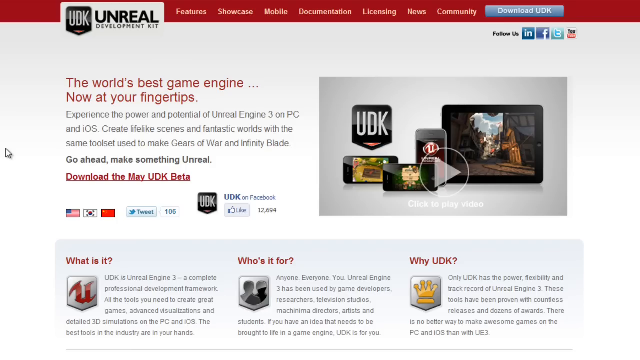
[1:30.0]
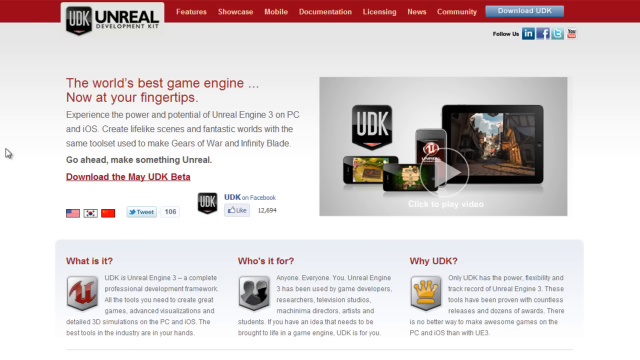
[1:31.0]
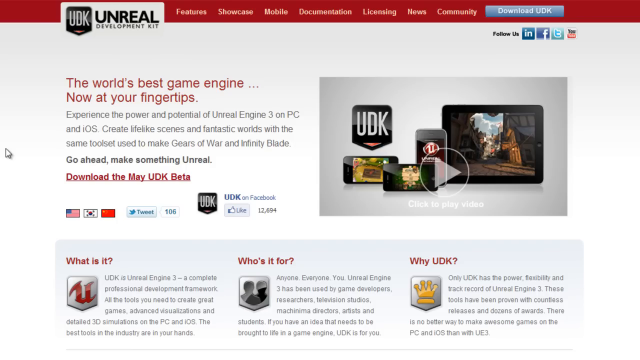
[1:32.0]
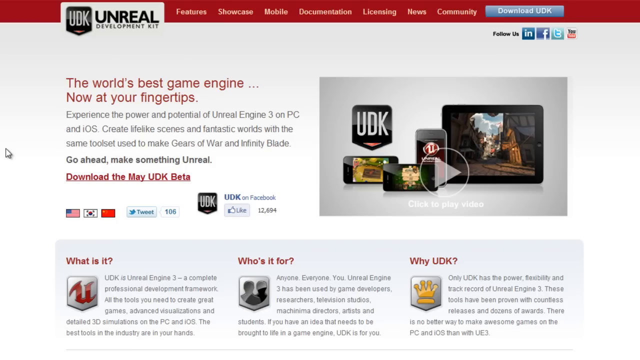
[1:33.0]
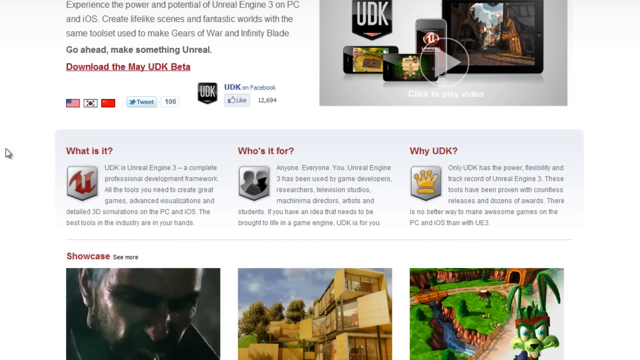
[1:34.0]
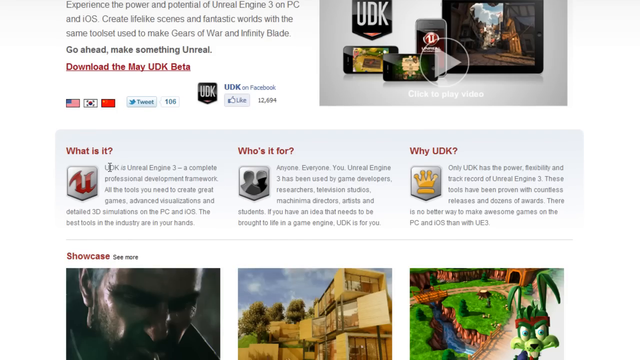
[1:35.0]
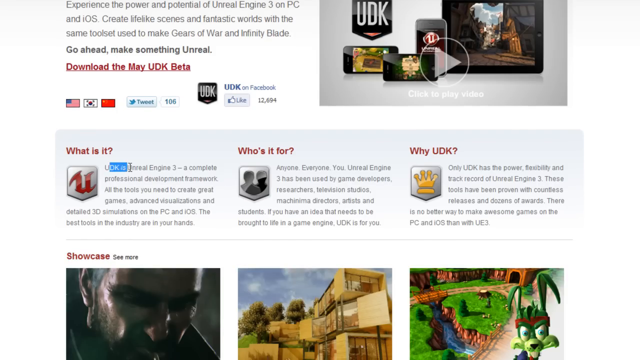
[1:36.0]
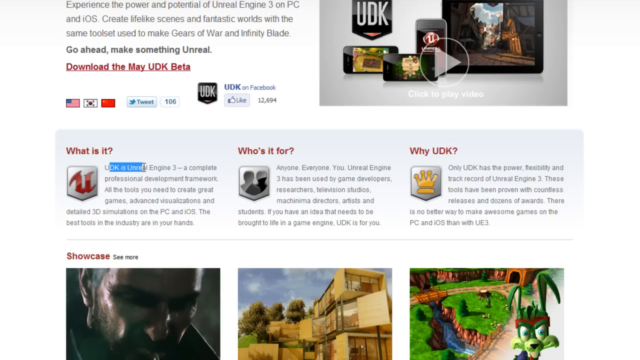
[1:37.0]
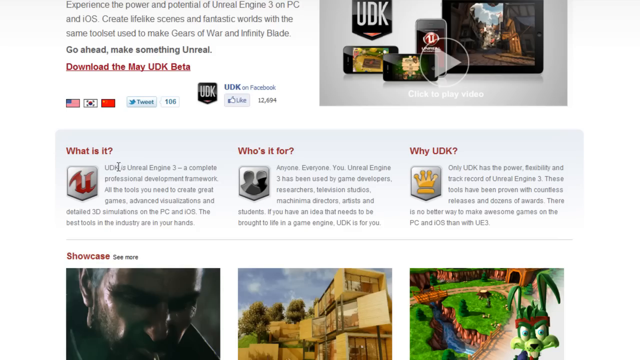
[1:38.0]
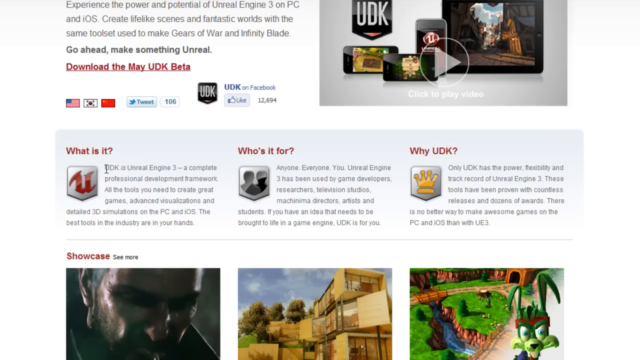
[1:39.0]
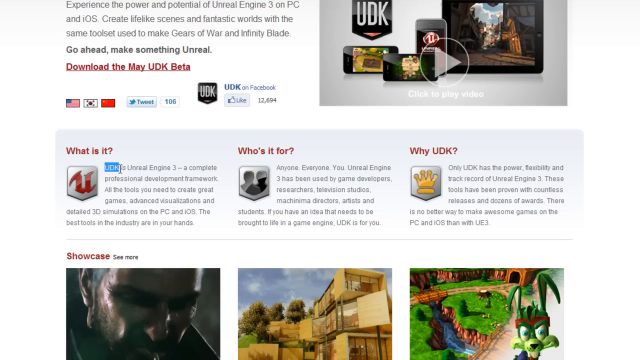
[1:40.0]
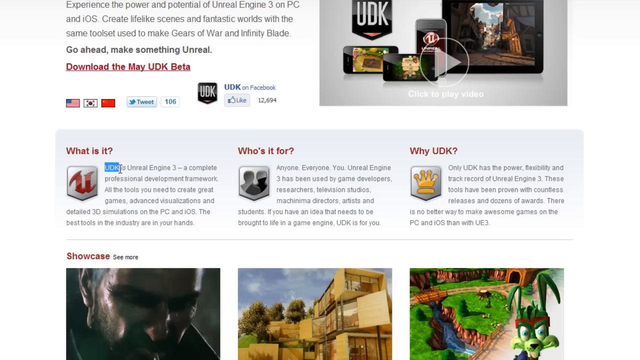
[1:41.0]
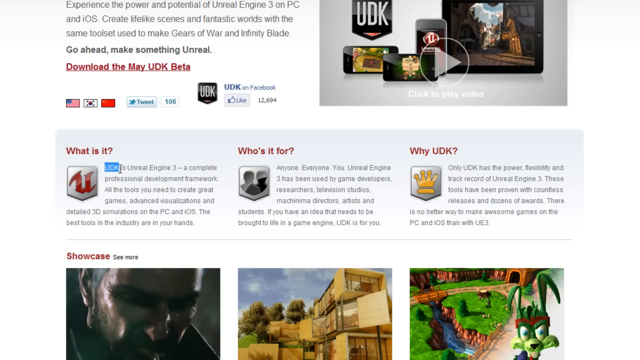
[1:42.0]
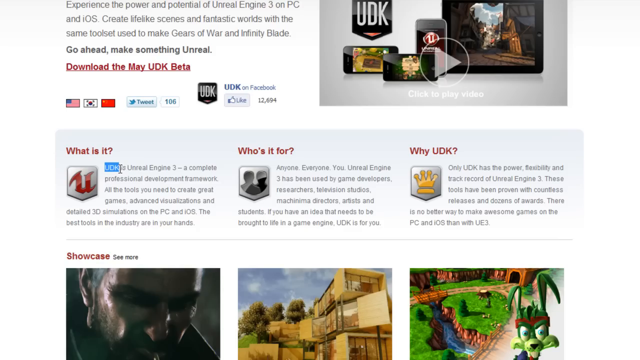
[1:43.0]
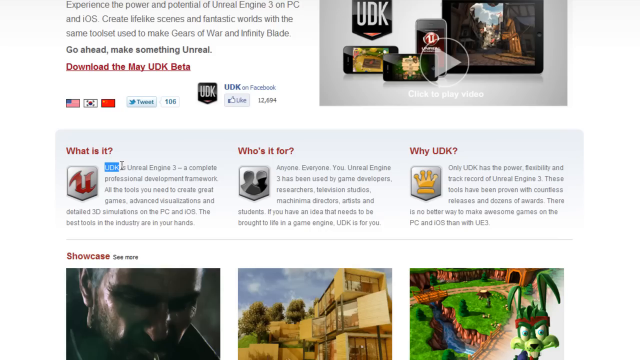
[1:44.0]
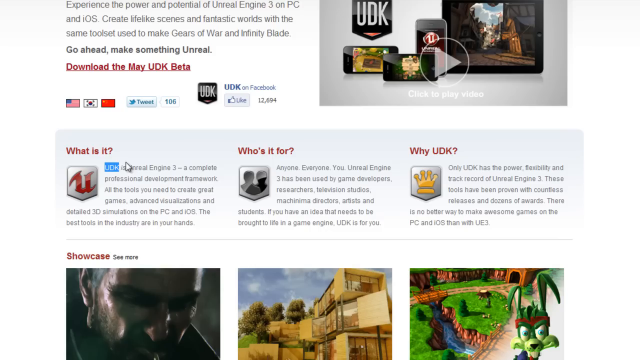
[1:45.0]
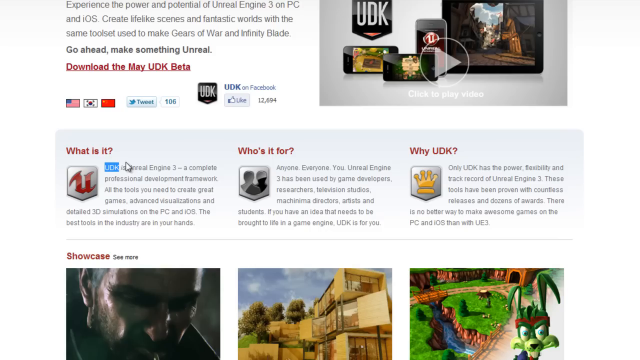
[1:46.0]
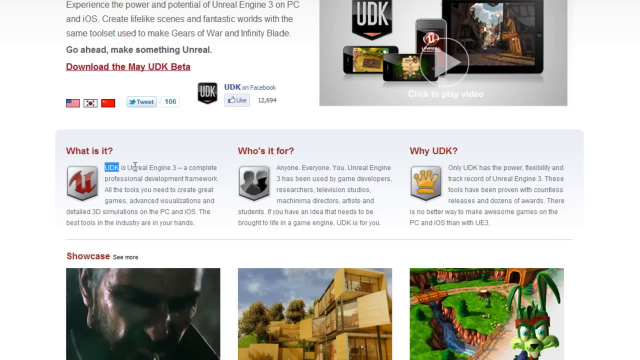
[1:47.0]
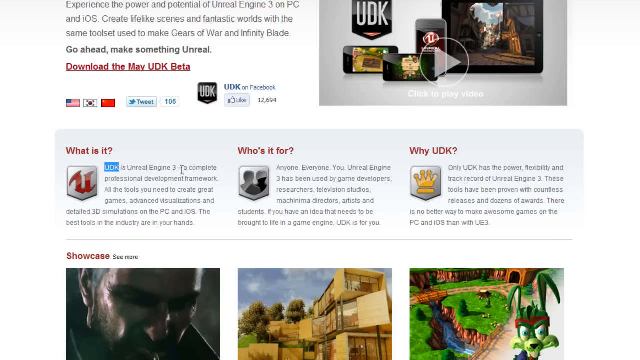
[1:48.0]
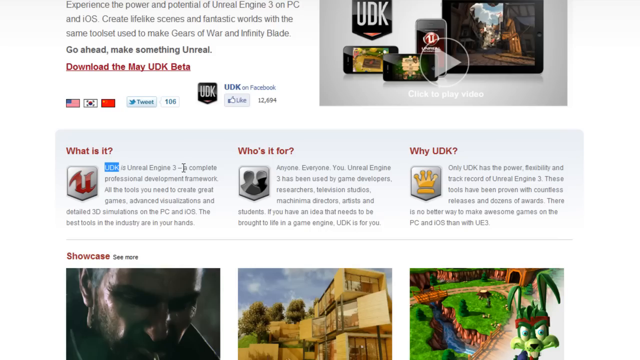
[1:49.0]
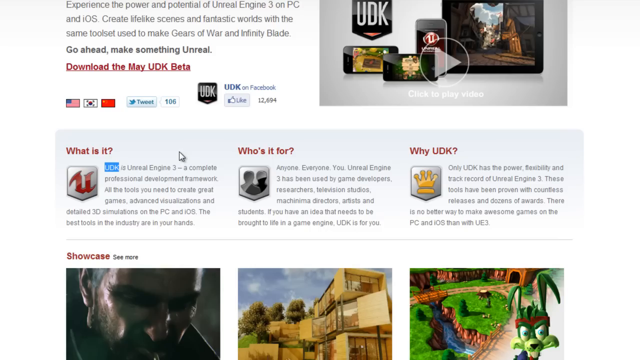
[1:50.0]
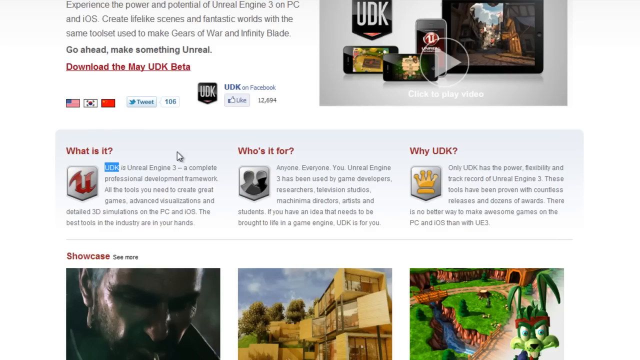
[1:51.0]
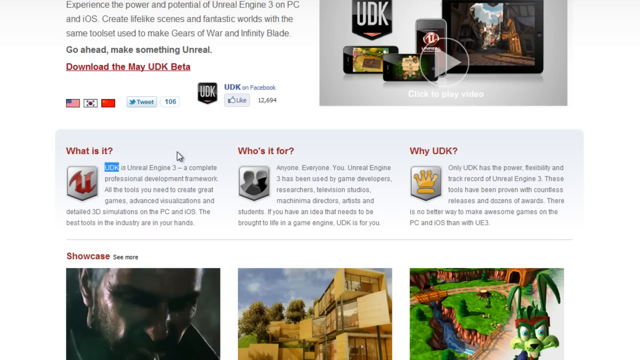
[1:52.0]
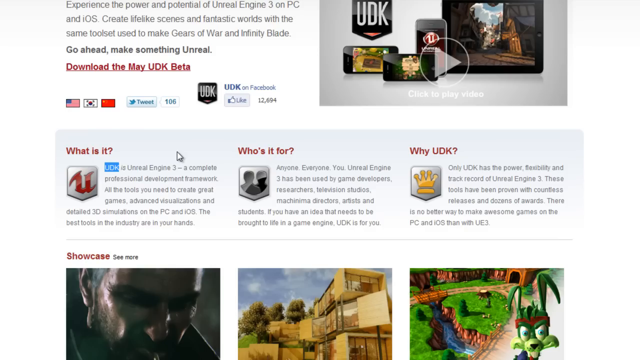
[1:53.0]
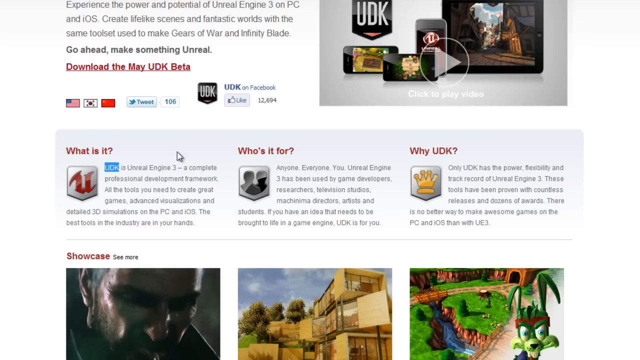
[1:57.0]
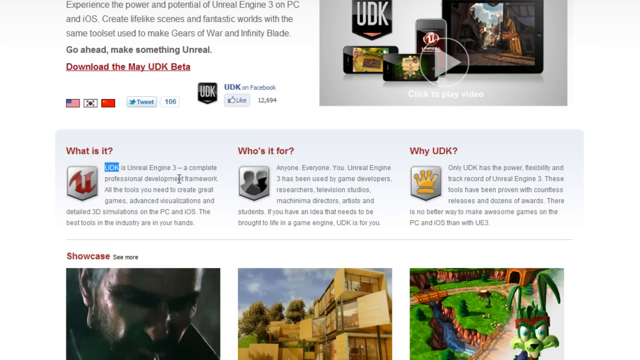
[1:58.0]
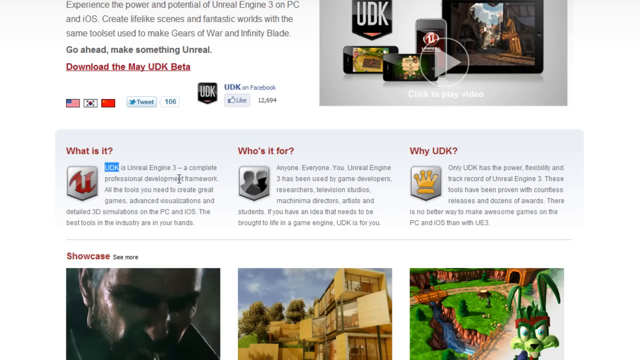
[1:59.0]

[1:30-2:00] The new page has red text in the top left reading "the world's best game engine now at your fingertips", and black text underneath reading "experience the power and potential of Unreal Engine 3 on PC and iOS create lifelike scenes and fantastic worlds with the same tool set used to make Gears of War and Infinity Blade". Bold text says "go ahead make something unreal", and clickable red text says "download the May UDK beta". Underneath are three flags: the USA, Korea in the middle, and China last. Next to them it says "tweet", showing 106 tweets, then "UDK on Facebook" with an option to like and 12,694 likes. In the top right is a video that can be played, with "click to play video". Below are three headings, "what is it", "who's it for" and "why UDK", with more information, for example "UDK is Unreal Engine 3 a complete professional development framework all the tools you need to create great games advanced visualizations and detailed 3d simulations on the PC and iOS".